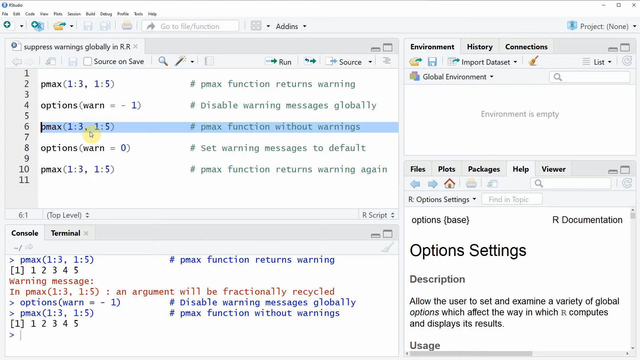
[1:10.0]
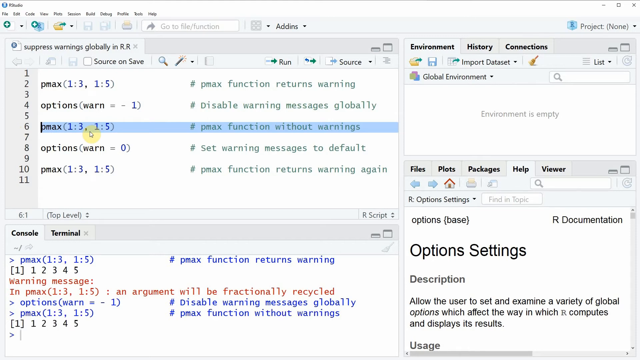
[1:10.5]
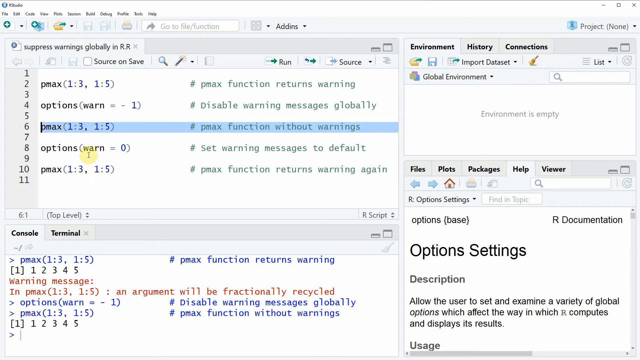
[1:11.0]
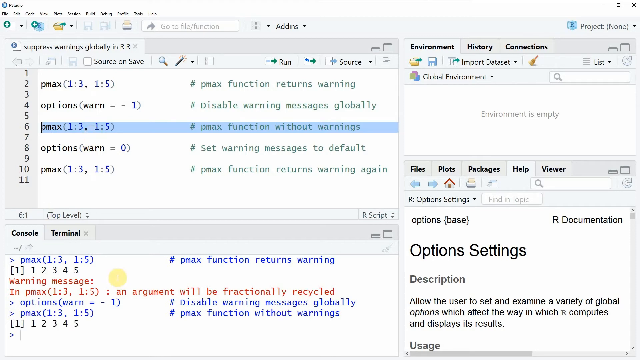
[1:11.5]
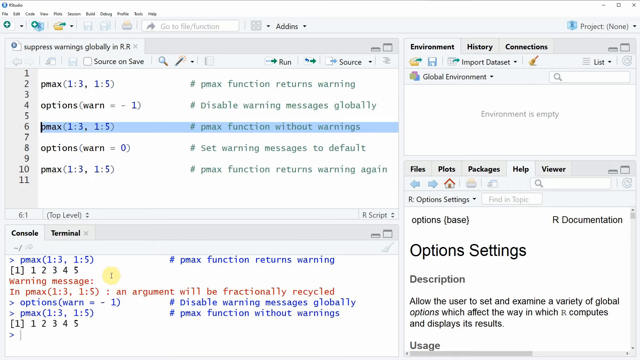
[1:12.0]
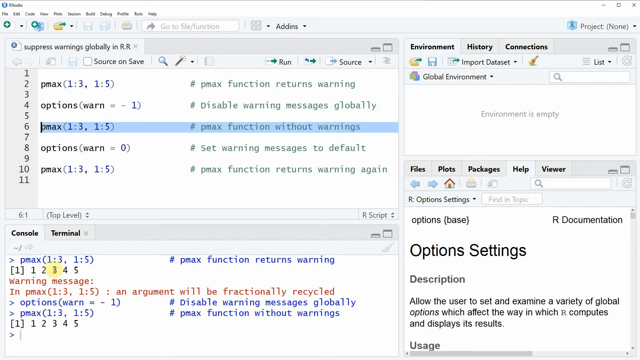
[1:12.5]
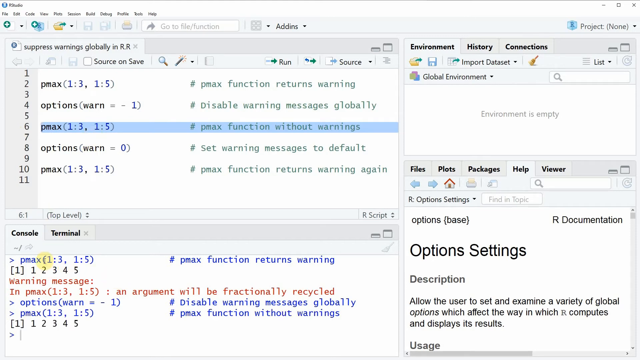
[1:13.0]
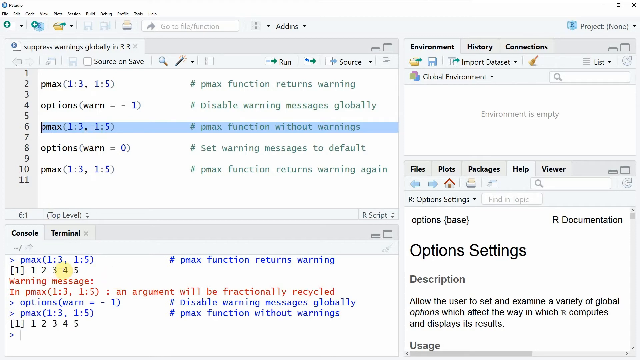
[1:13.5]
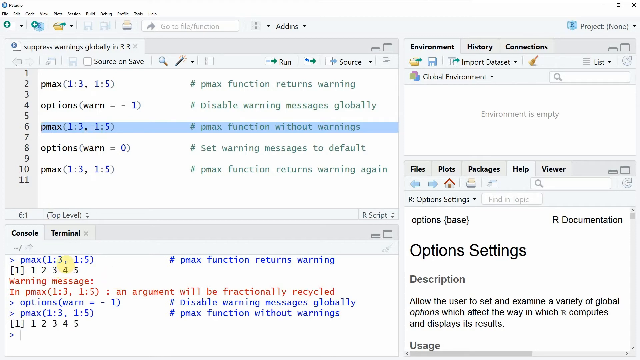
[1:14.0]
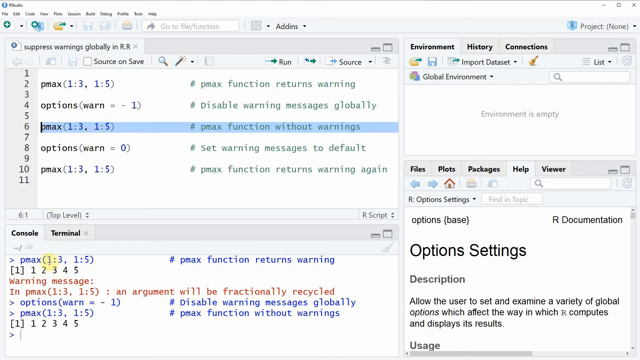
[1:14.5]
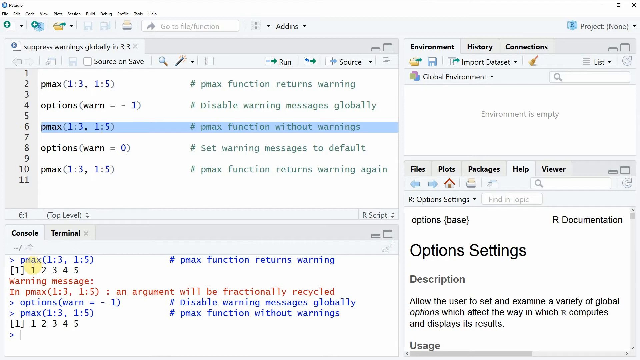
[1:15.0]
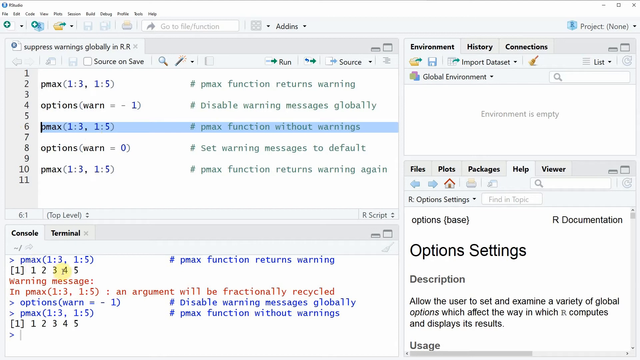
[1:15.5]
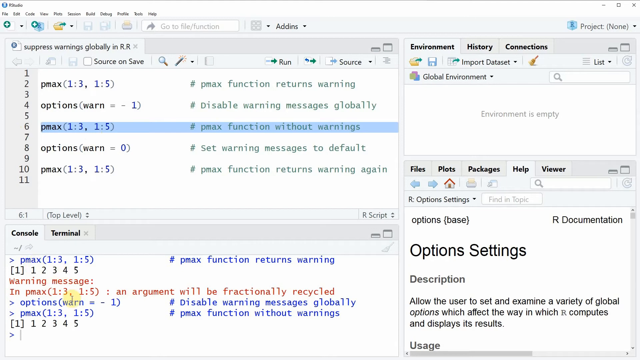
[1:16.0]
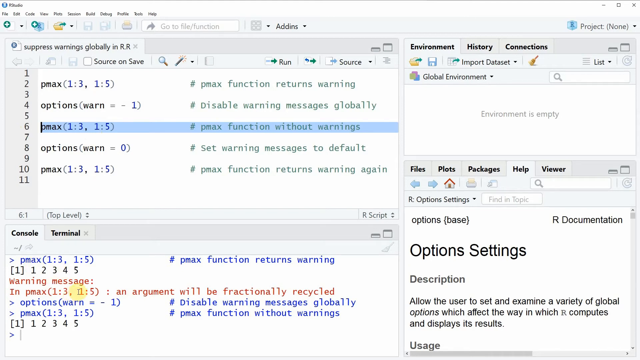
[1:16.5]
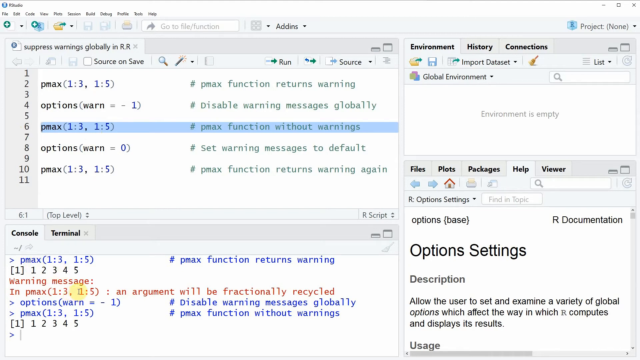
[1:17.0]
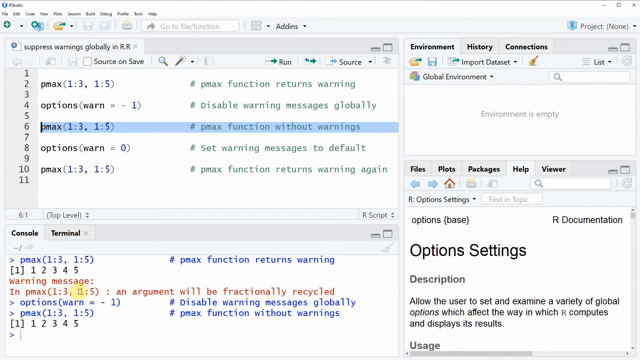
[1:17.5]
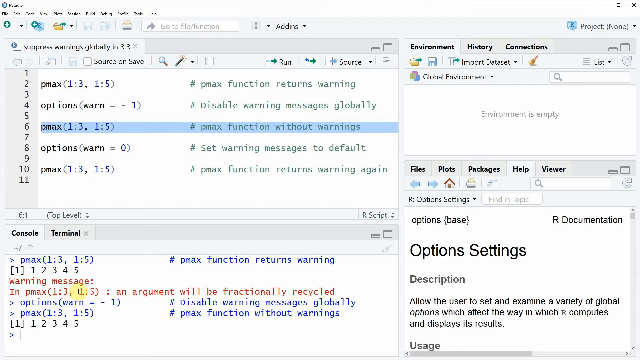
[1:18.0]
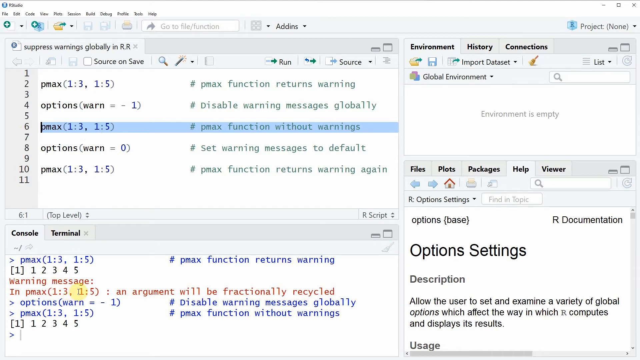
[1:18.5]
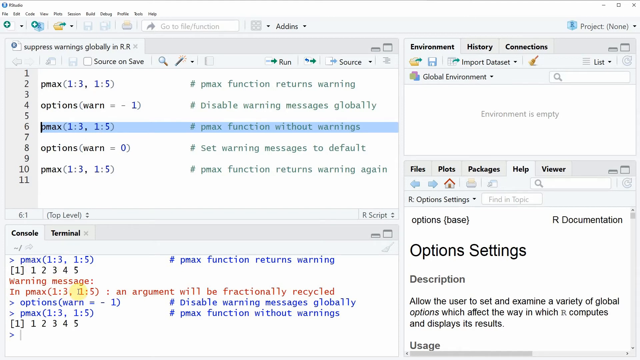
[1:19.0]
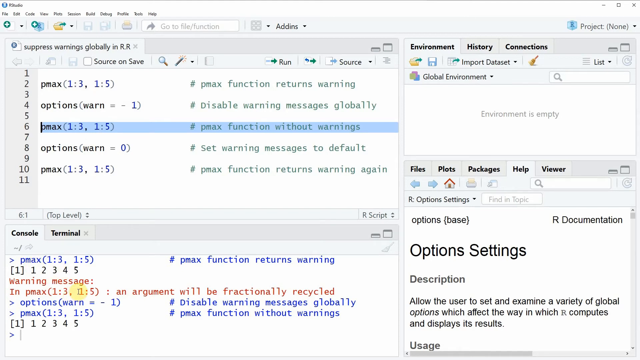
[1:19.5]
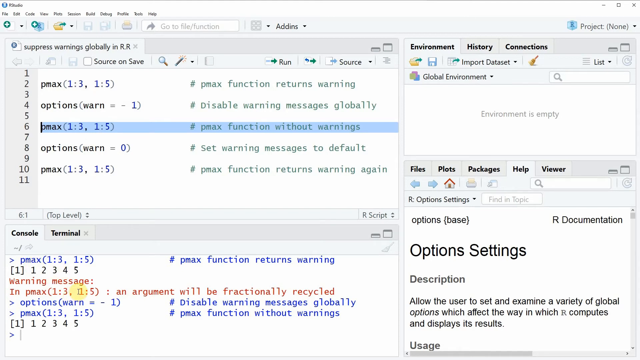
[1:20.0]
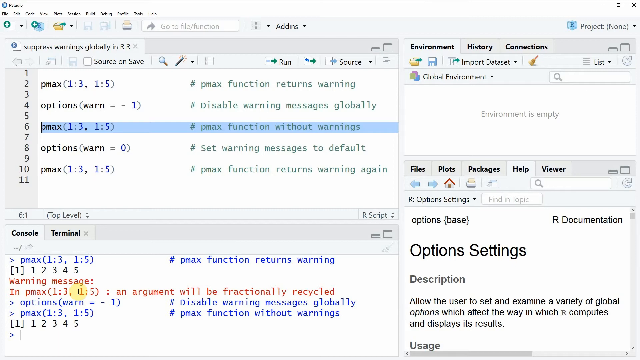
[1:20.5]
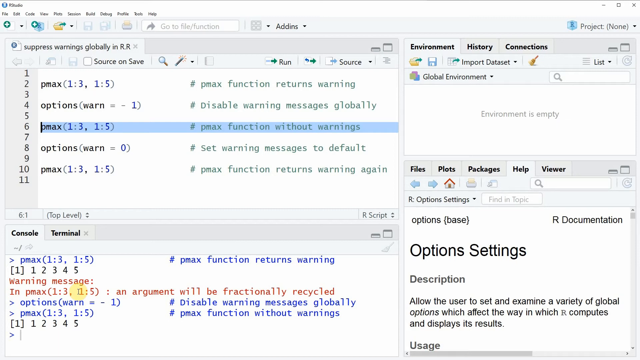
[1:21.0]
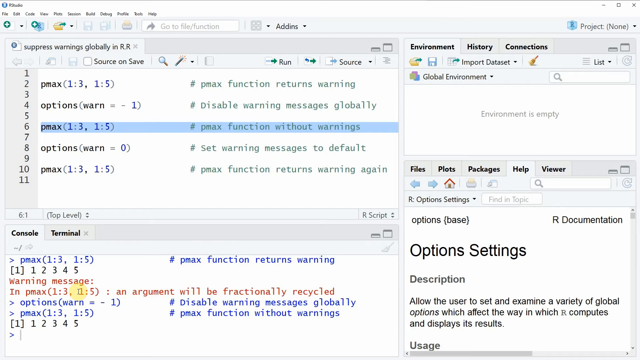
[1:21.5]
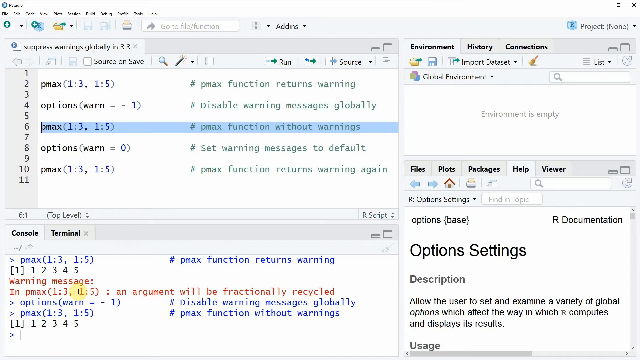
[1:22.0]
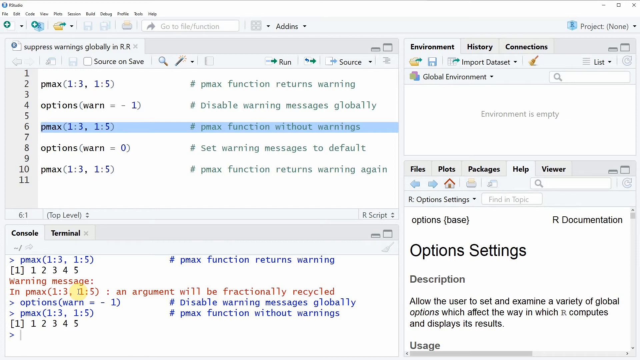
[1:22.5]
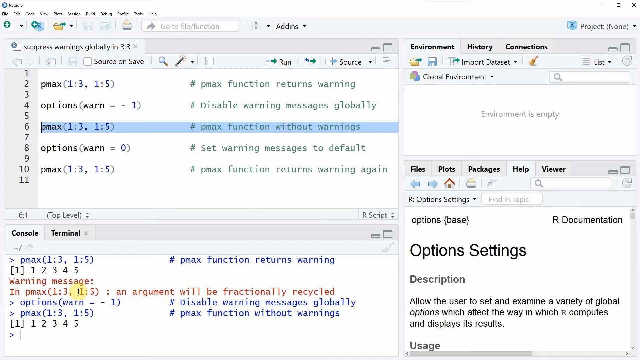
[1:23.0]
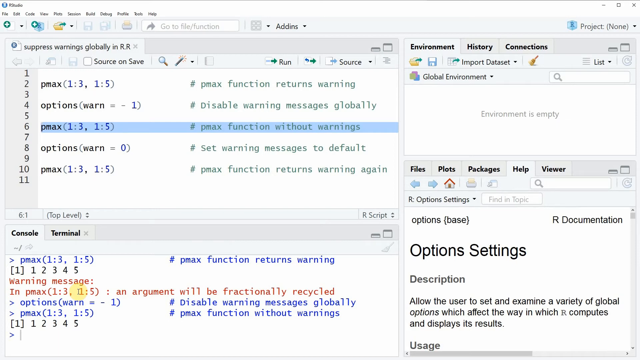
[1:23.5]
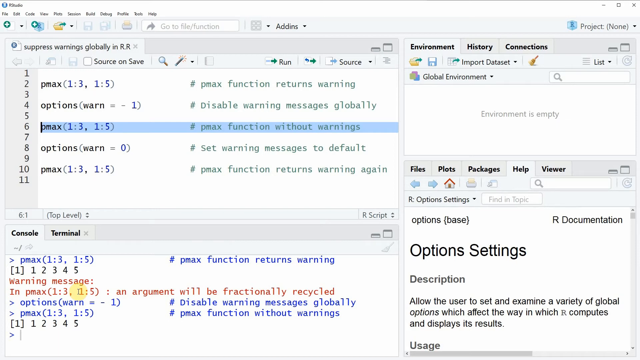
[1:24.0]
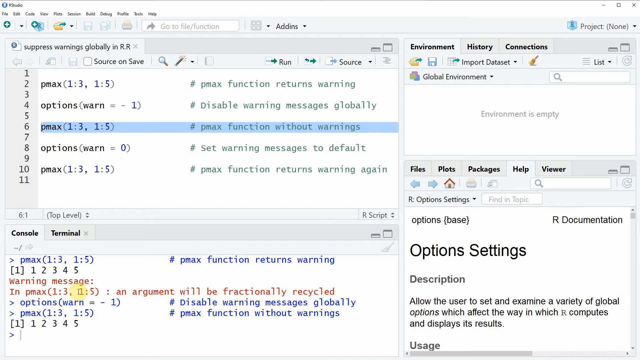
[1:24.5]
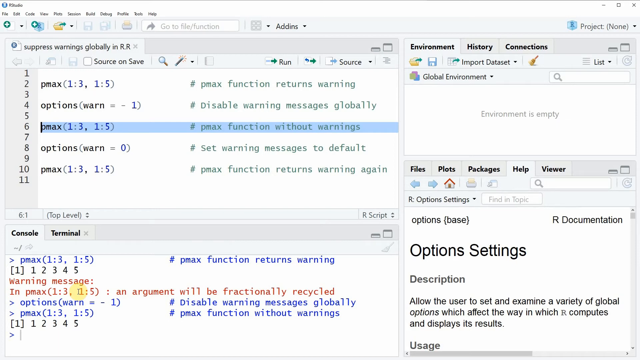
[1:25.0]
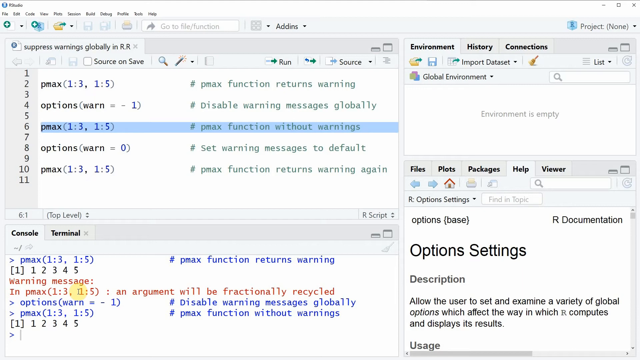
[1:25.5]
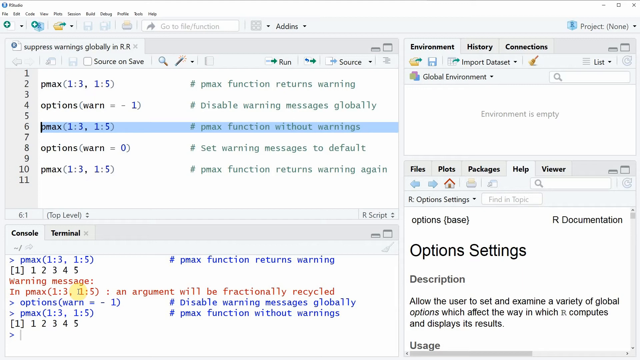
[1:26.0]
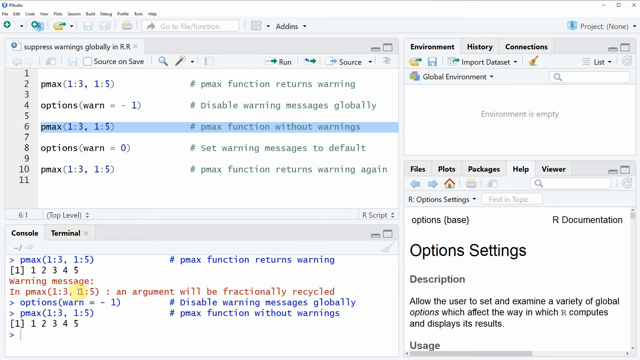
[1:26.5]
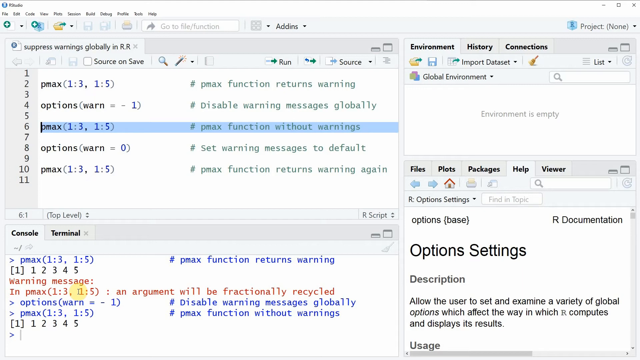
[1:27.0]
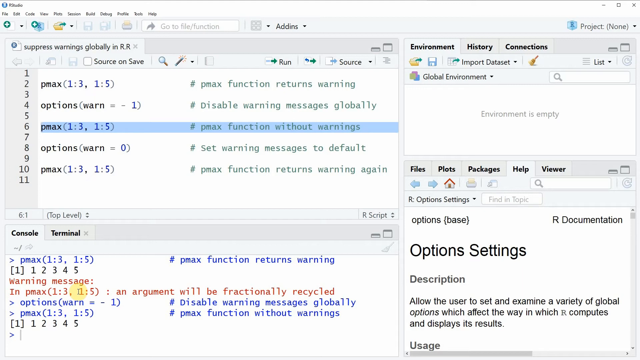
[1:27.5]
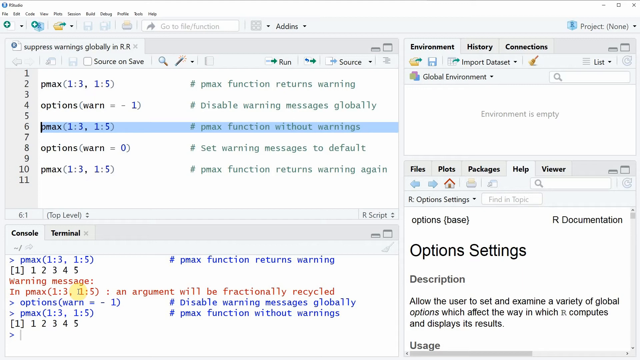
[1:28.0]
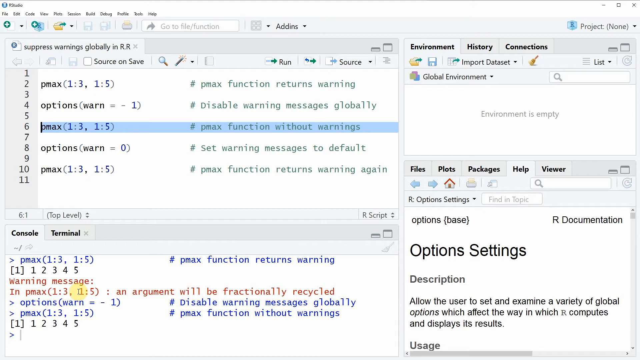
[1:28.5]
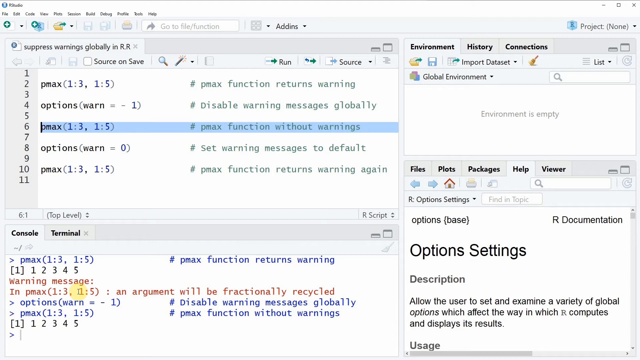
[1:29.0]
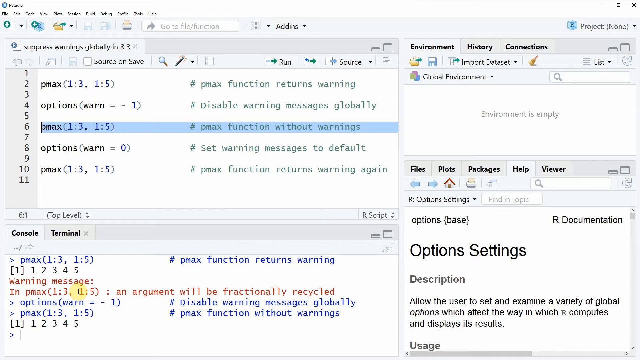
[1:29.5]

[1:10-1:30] The same coding page on the unidentified platform shows lines of code. The pmax line, pmax(1:3, 1:5), with the comment about the pmax function without warnings, is selected and run. After running, the output displays only the result without warnings: pmax(1,3, 1,5) followed by 1, 2, 3, 4, 5. The pmax input remains selected.